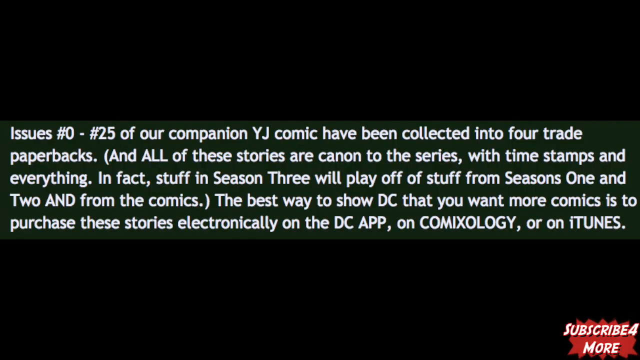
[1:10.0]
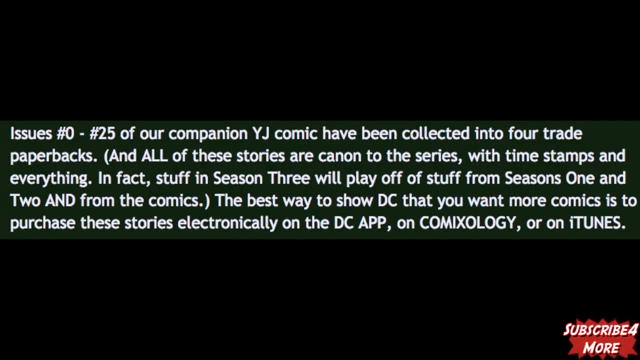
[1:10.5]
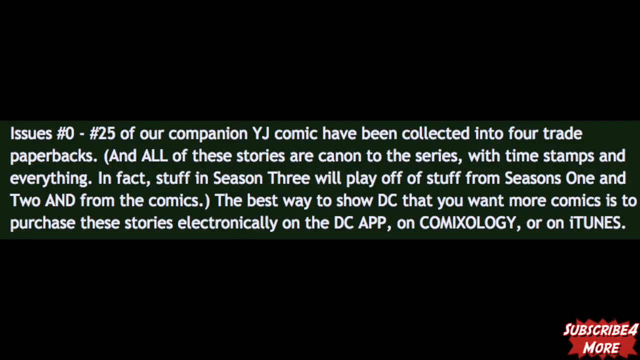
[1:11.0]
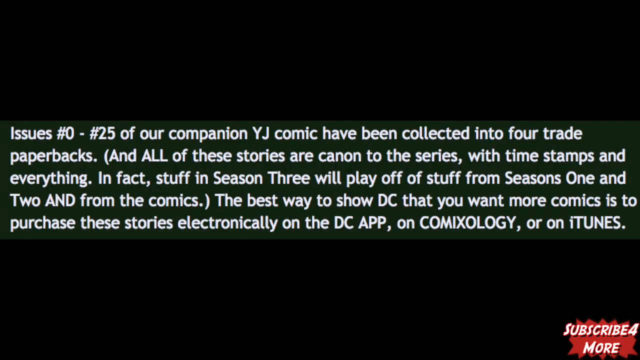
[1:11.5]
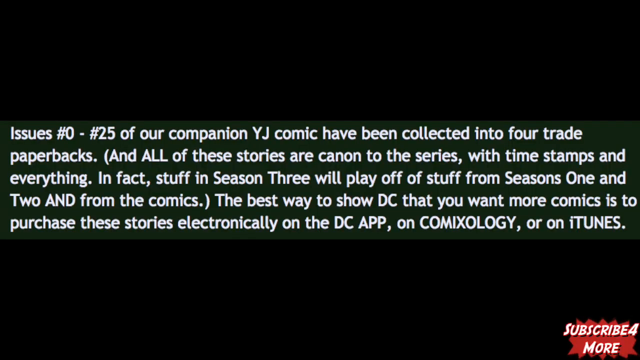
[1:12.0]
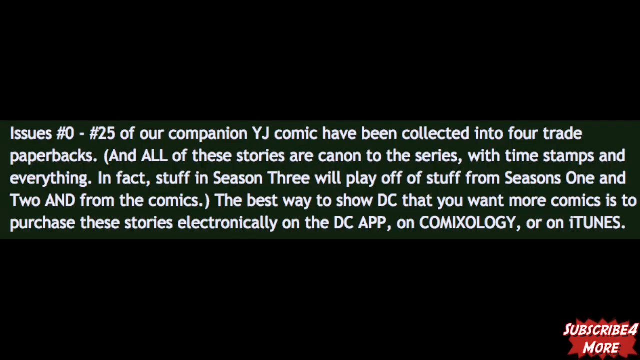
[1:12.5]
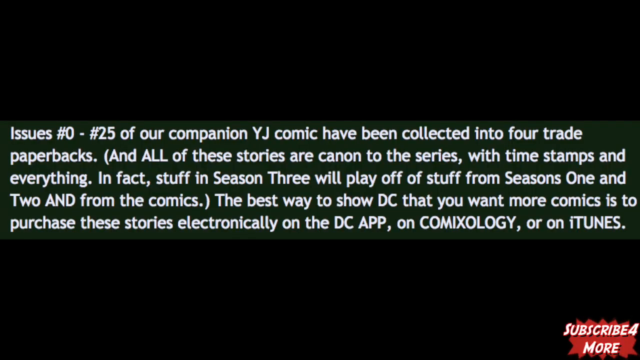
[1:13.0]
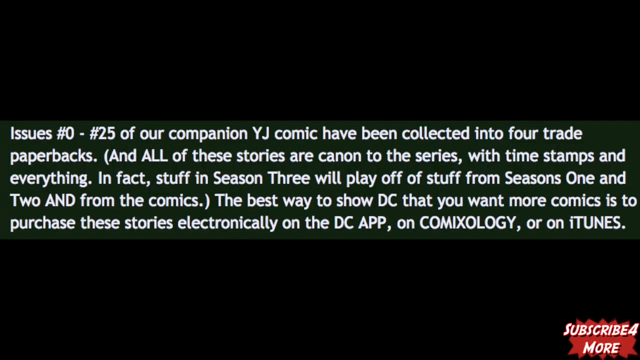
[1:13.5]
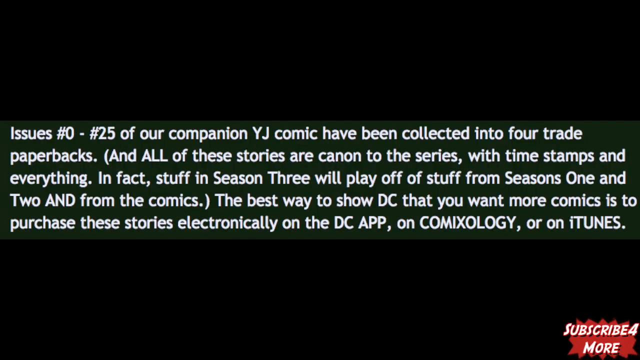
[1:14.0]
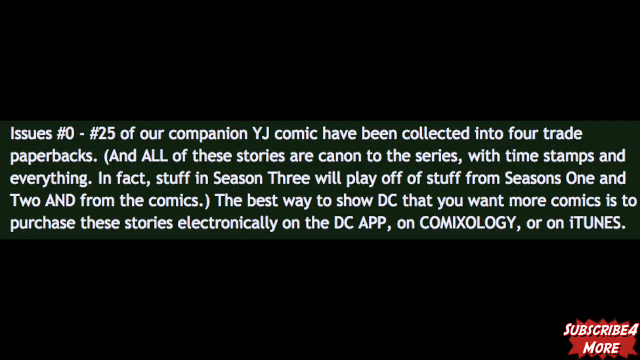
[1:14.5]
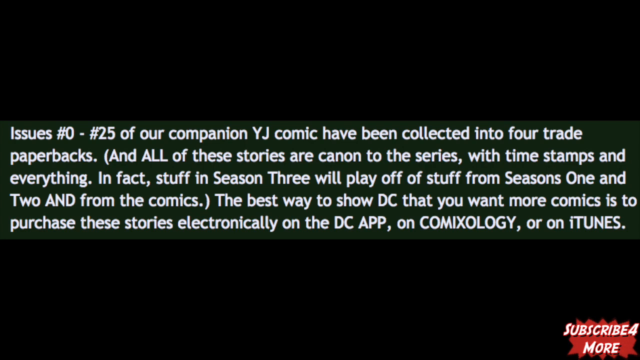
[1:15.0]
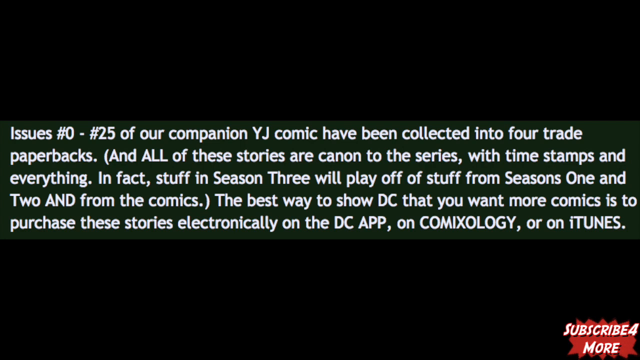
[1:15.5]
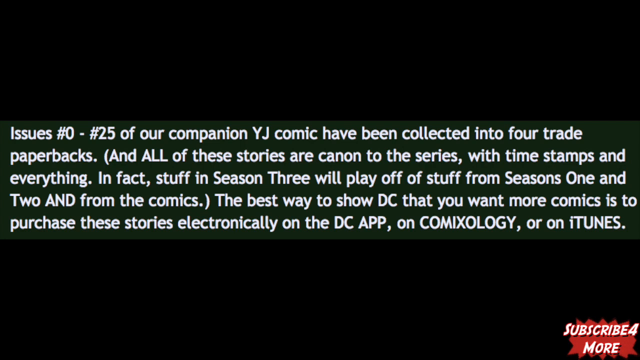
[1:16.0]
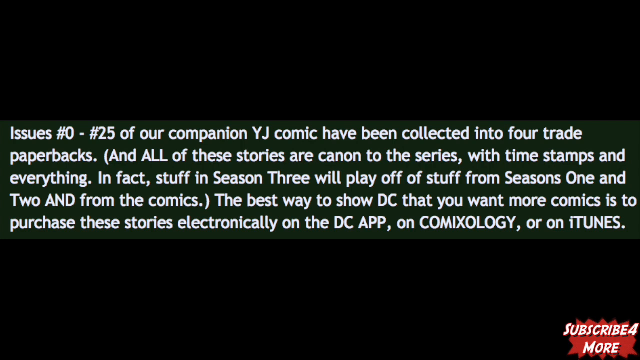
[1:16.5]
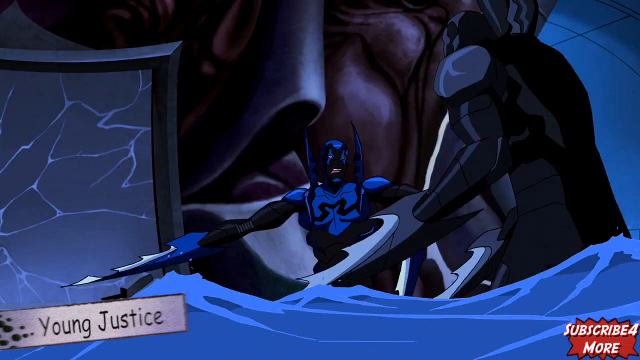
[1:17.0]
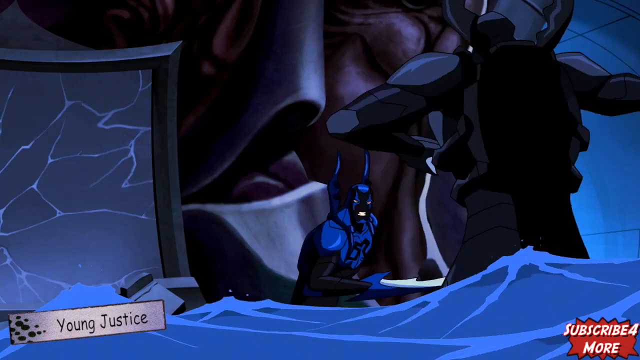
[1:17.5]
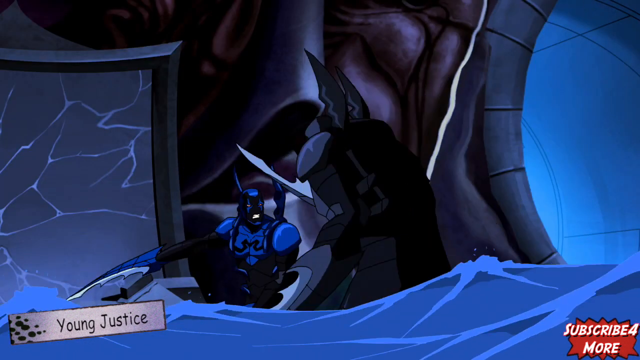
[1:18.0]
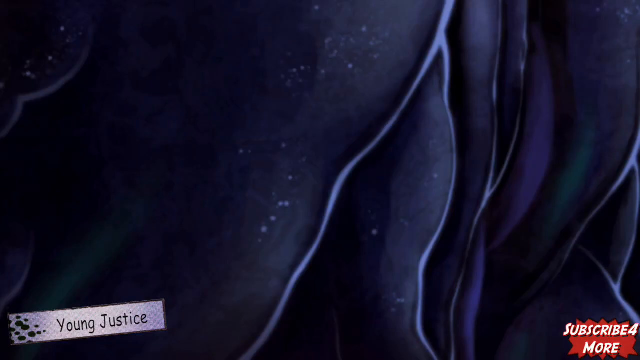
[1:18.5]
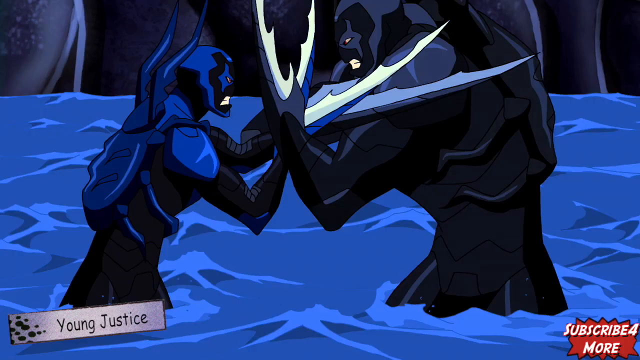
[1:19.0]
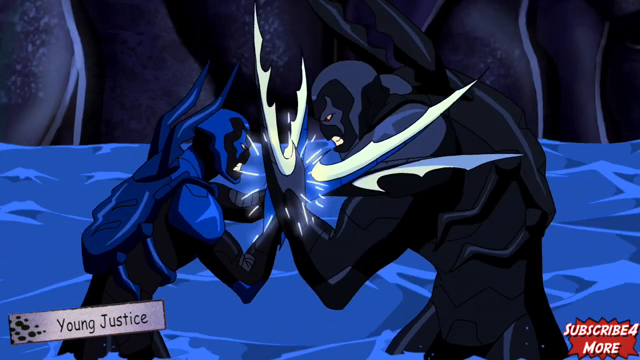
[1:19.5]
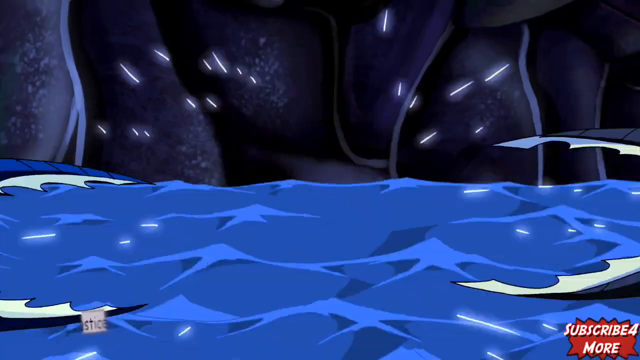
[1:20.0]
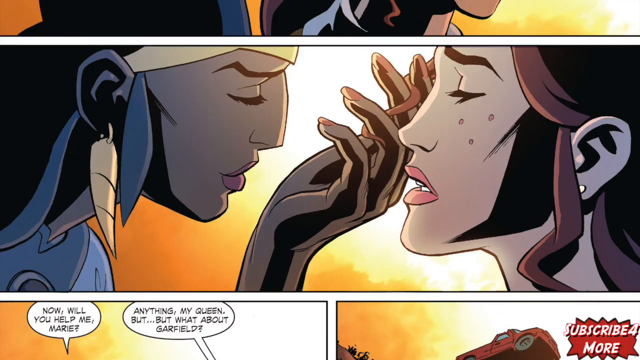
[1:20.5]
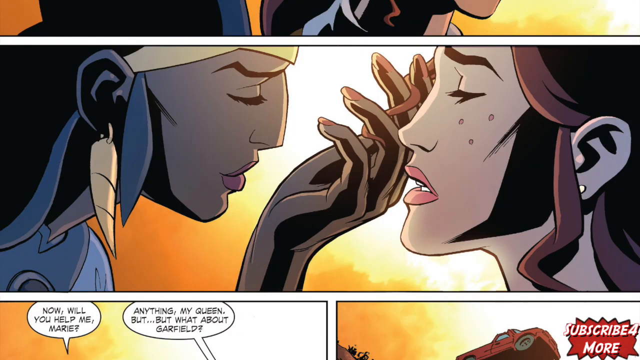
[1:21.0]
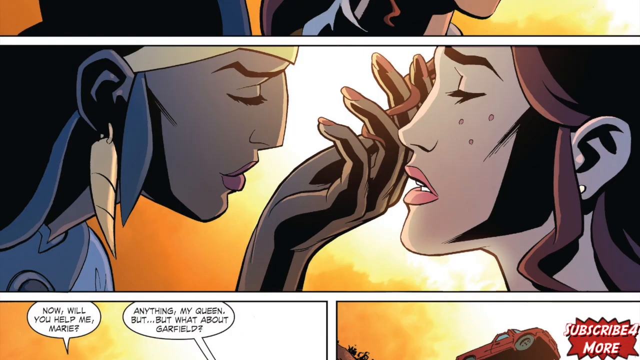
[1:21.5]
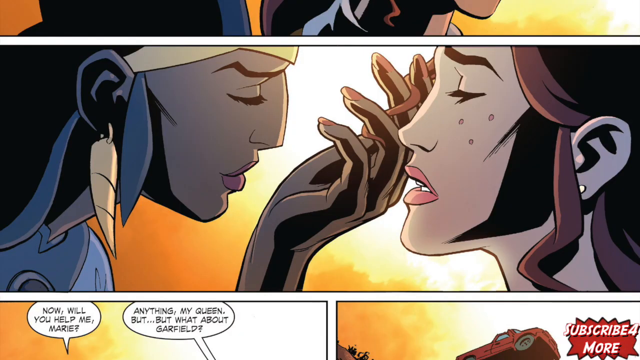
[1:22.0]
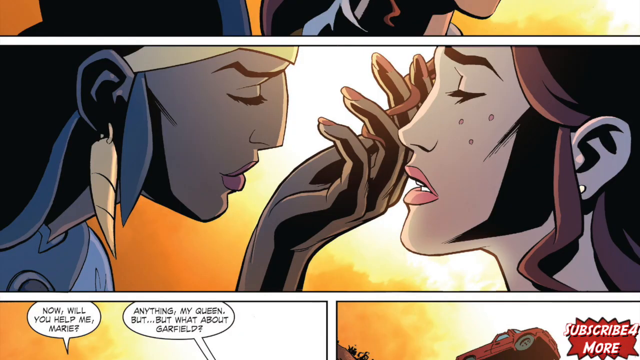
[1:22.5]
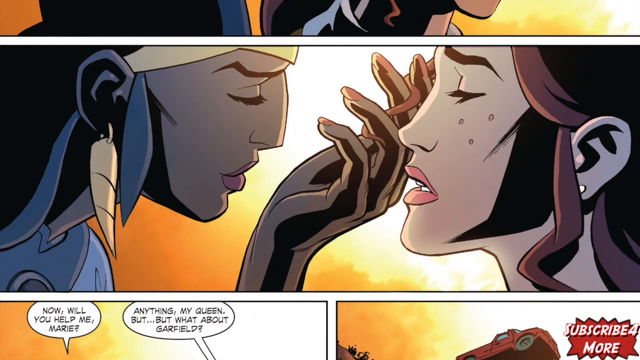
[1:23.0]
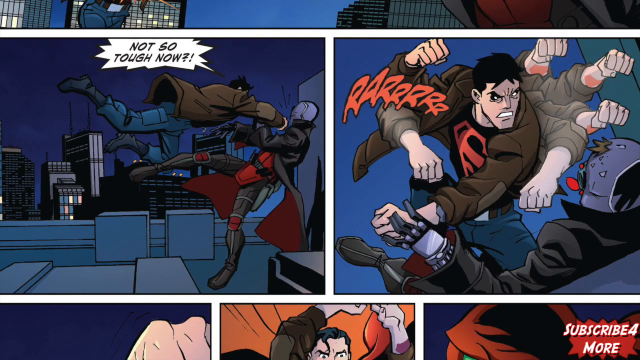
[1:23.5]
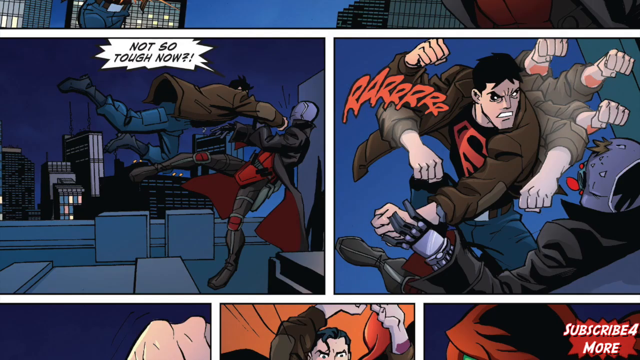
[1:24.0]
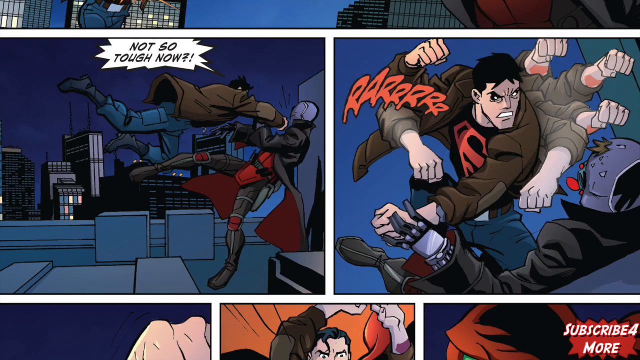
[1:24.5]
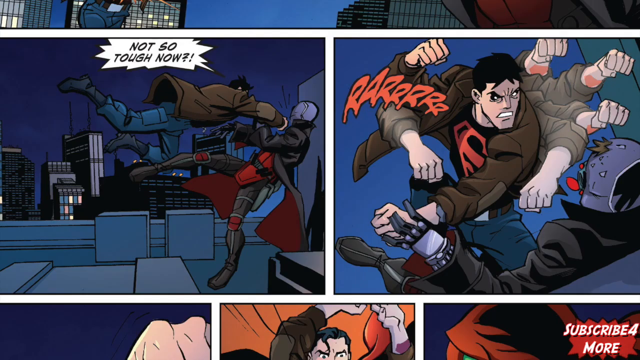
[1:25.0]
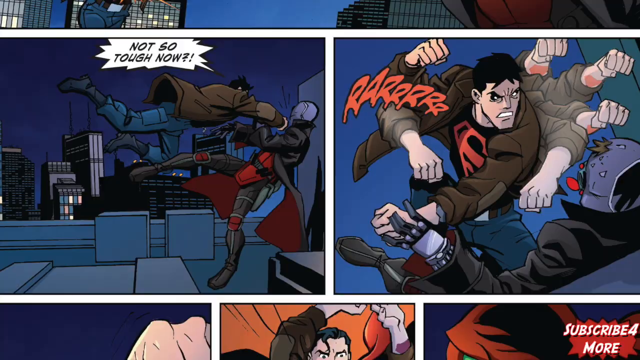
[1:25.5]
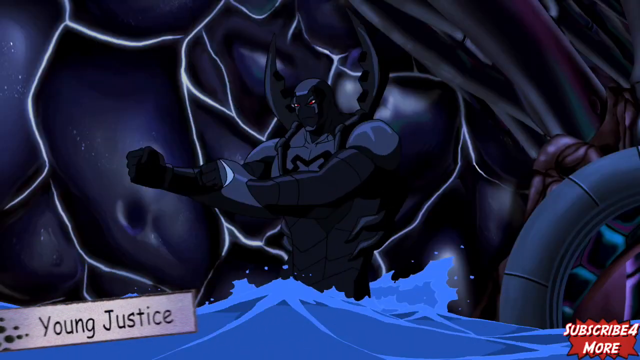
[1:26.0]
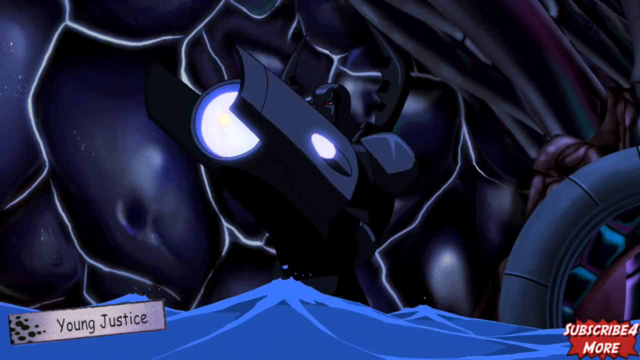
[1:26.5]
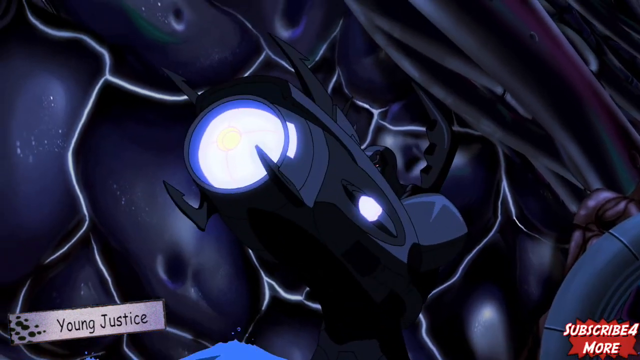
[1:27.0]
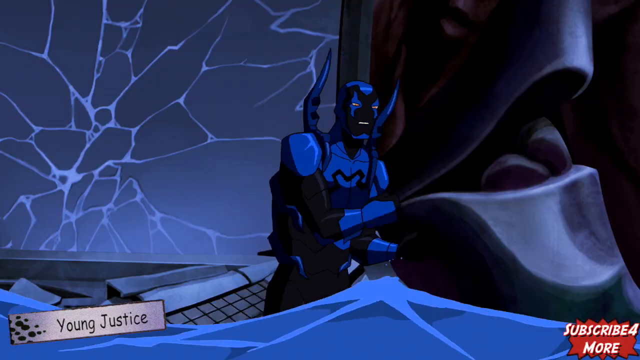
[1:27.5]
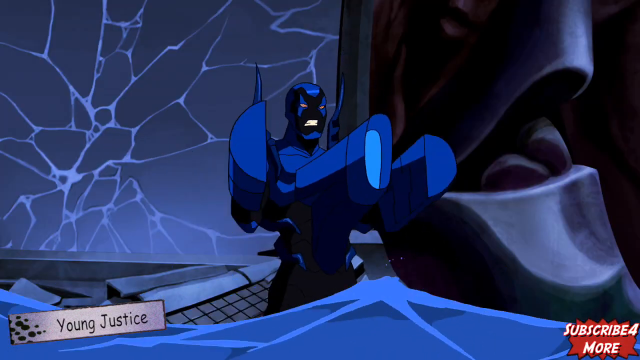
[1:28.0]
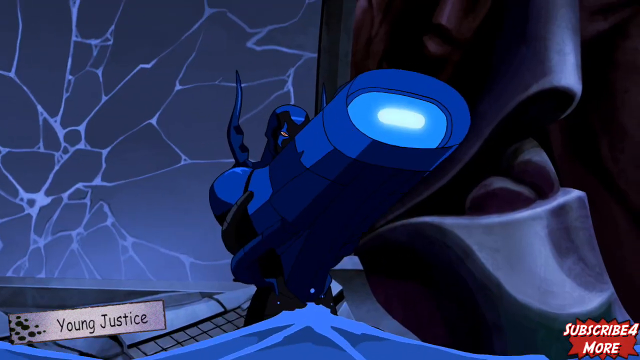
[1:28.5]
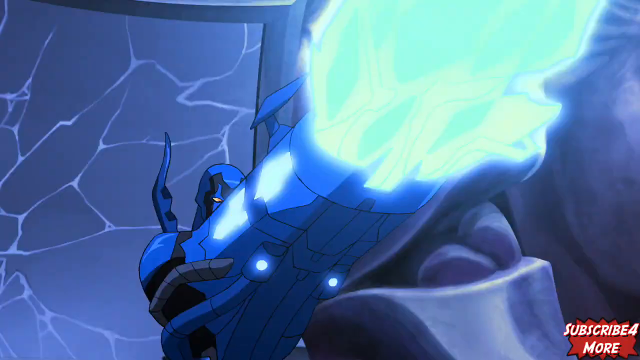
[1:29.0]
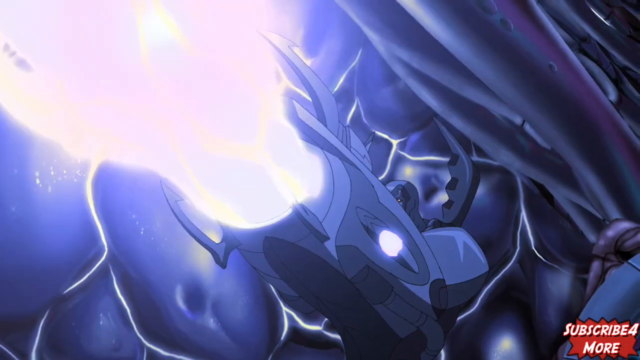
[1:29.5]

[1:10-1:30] The on-screen text from earlier about issues 0 to number 25 appears. The video then cuts to an animation in mid-action: there is a tunnel to the right with water rushing through the bottom, and two creatures are fighting, their swords, which are like daggers, crashing into each other. The two creatures have pointed wings; the left one is blue and the right one is black and gray. They are intertwined, head-butting, and then pull apart. The video cuts to an image from a comic book: on the left, someone with a long dangly earring and very dark skin has their hand turned palm up and their eye closed, brushing the hair of a girl on the right between their fingers. The girl's lips are slightly open, with no teeth visible, her eyes are closed, and her brows are somewhat furrowed, as if worried. Sunlight beams on them, seemingly later in the day. Another comic strip follows with two images: on the left, a man in a brown coat punches a man with a blue head and a long trench coat, who has fallen backwards and looks robotic; the right image is a close-up of the man punching, with his fist rotated around him going from dark to light to show the action. The video cuts back to the tunnel, where the two creatures battle under the water. They both fire their laser guns, and the lasers crash into each other.